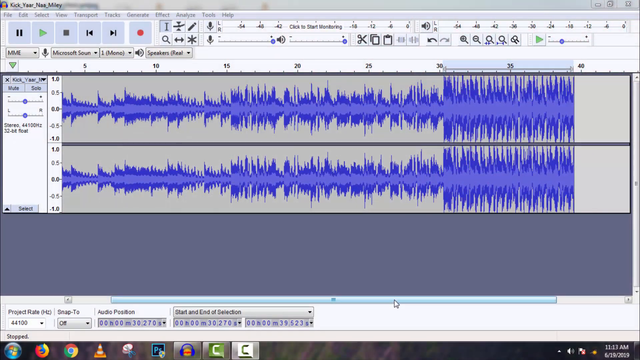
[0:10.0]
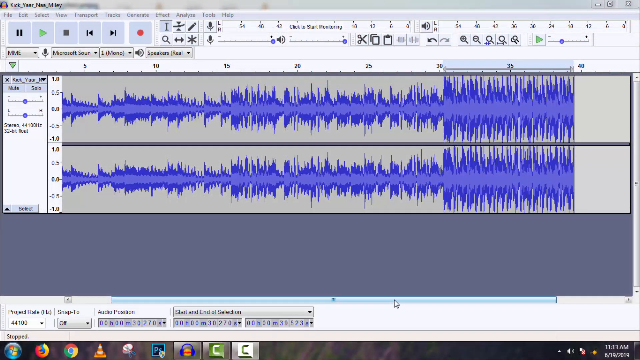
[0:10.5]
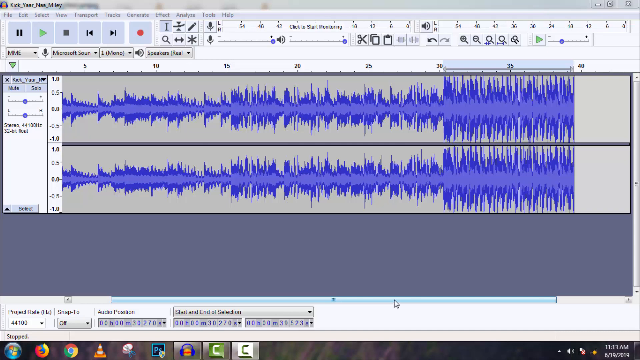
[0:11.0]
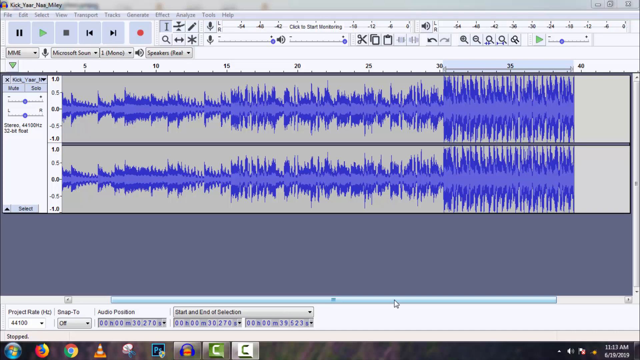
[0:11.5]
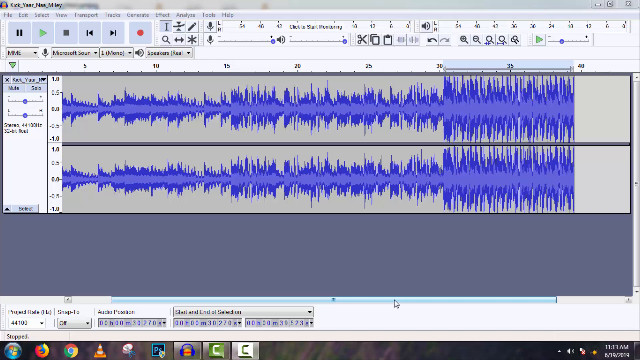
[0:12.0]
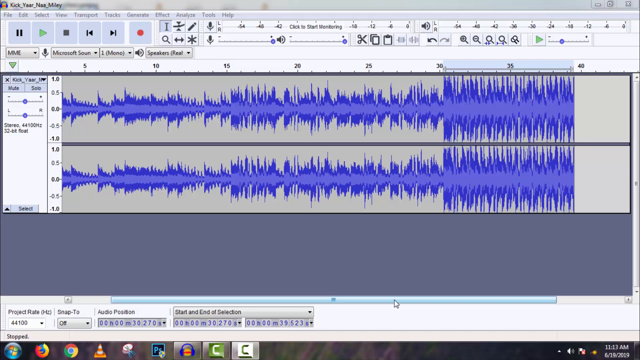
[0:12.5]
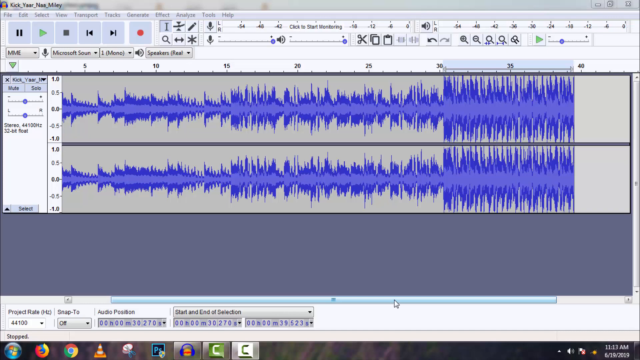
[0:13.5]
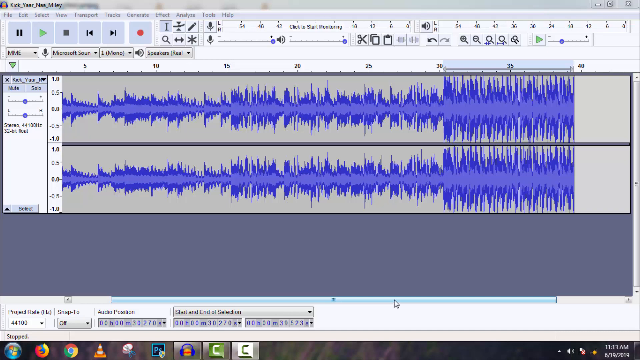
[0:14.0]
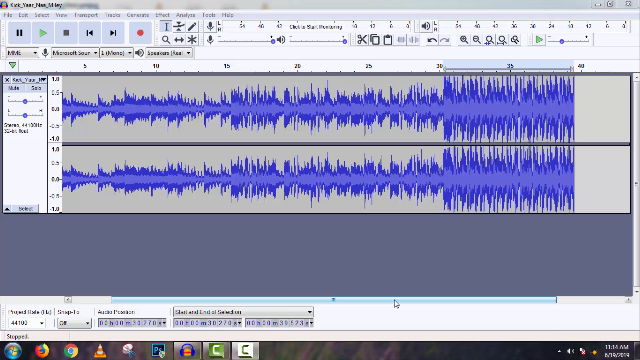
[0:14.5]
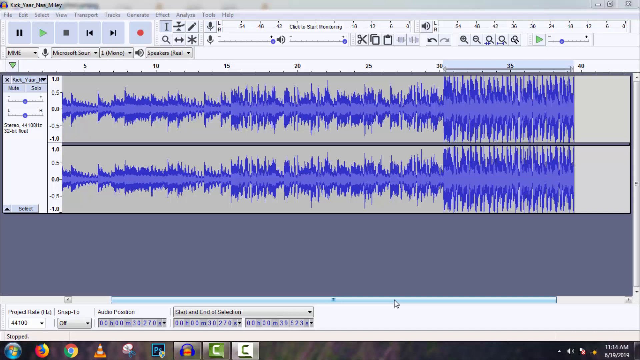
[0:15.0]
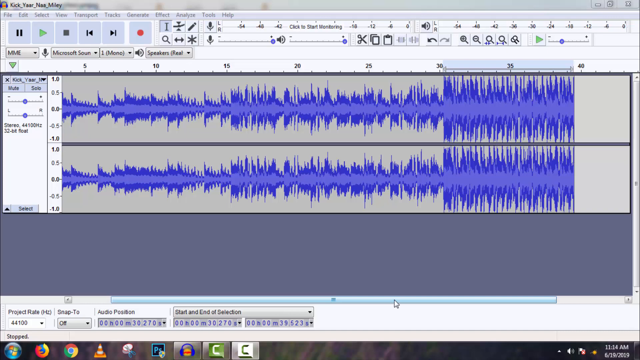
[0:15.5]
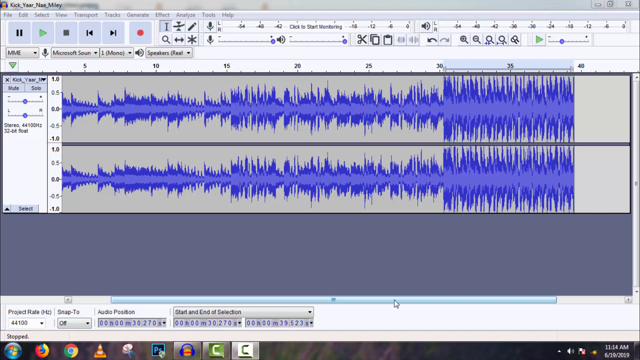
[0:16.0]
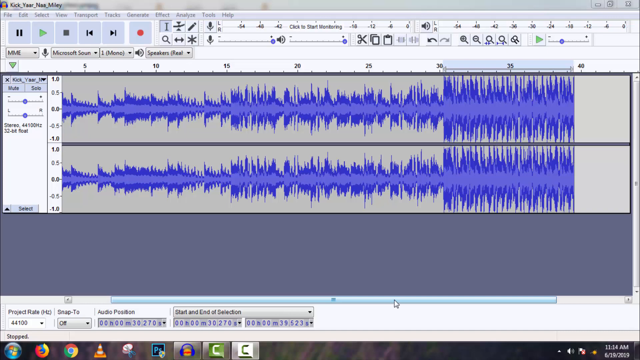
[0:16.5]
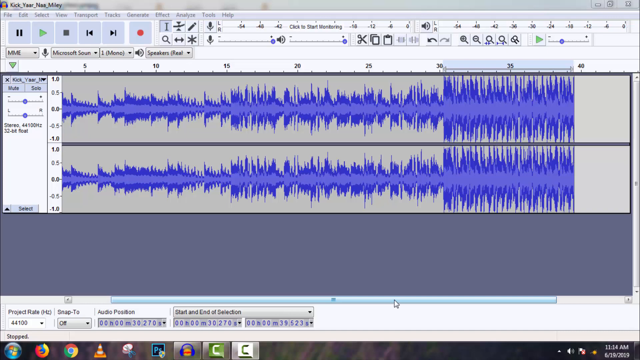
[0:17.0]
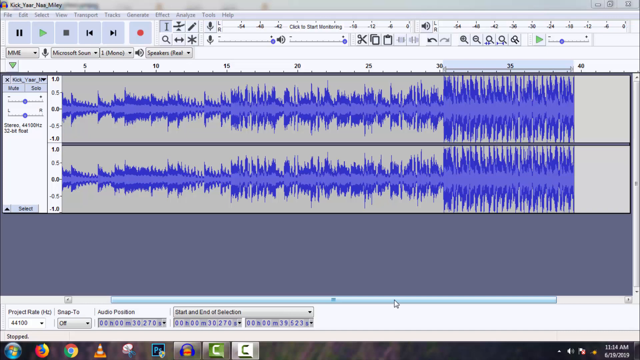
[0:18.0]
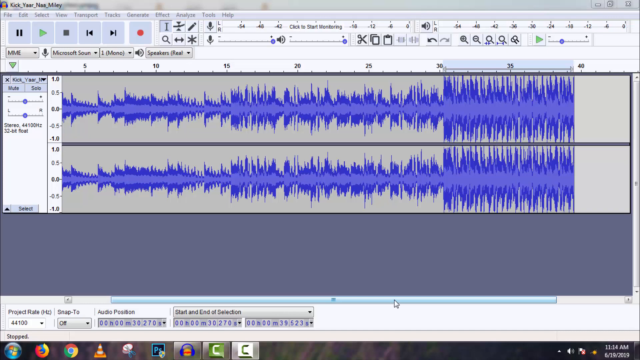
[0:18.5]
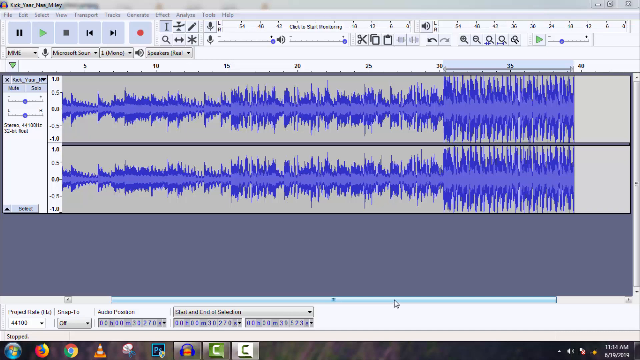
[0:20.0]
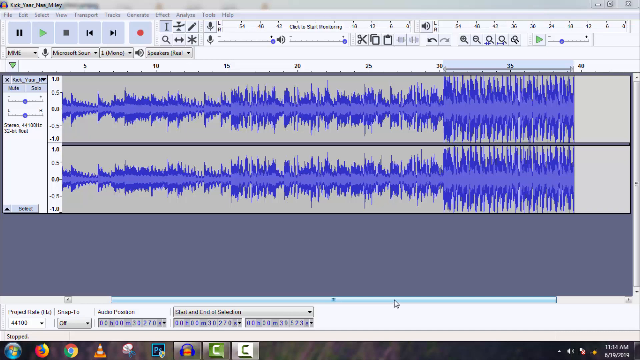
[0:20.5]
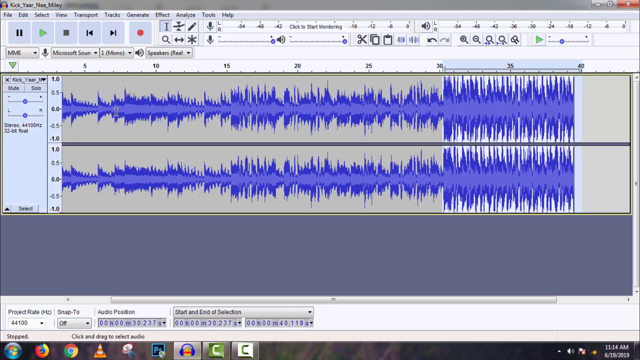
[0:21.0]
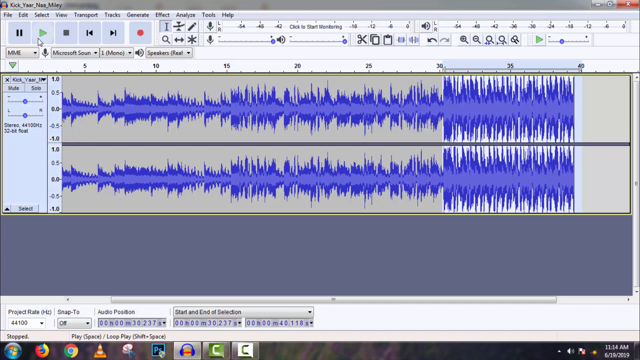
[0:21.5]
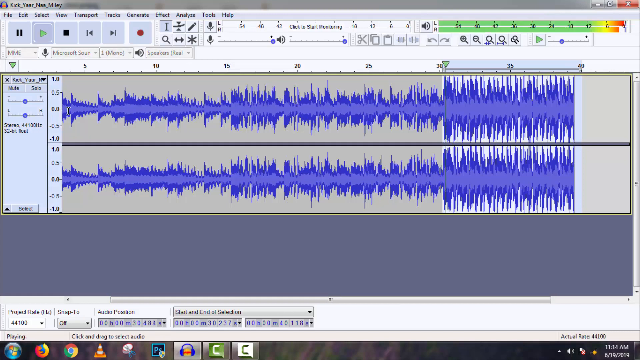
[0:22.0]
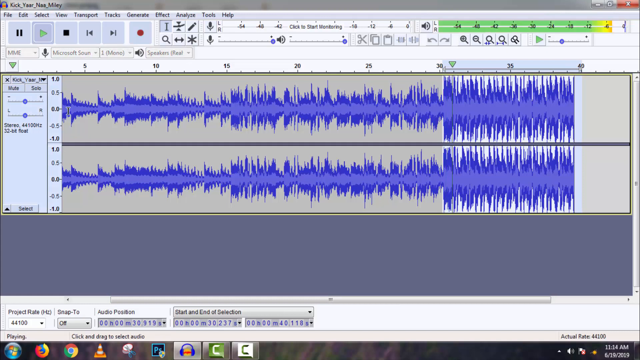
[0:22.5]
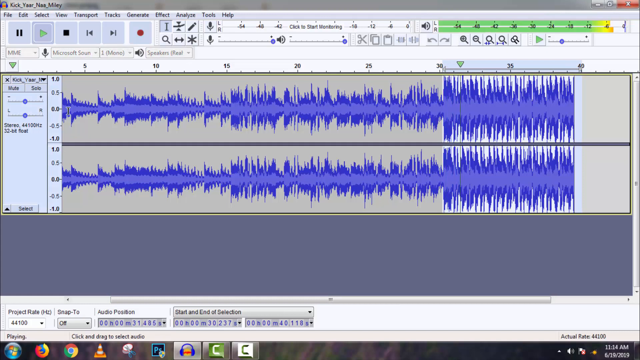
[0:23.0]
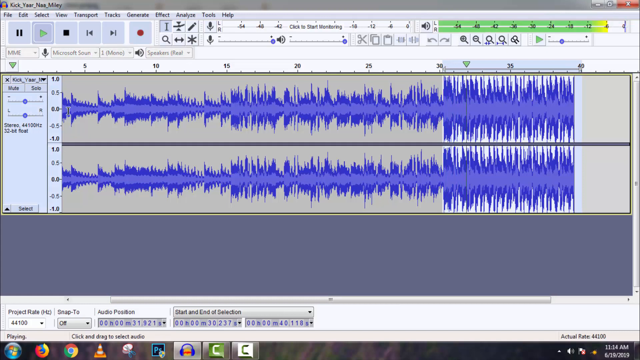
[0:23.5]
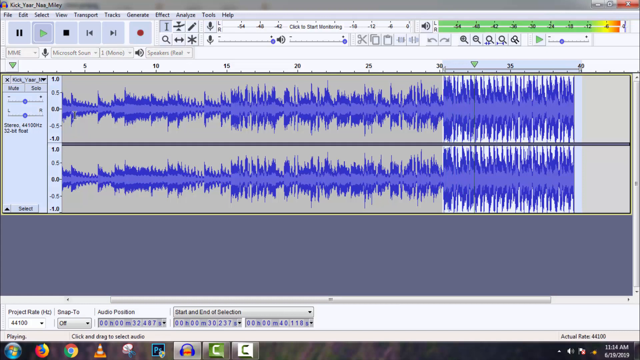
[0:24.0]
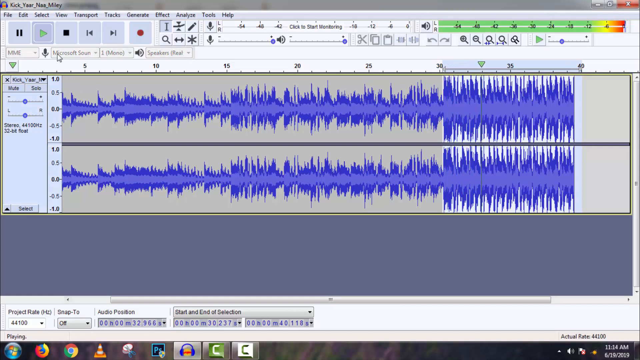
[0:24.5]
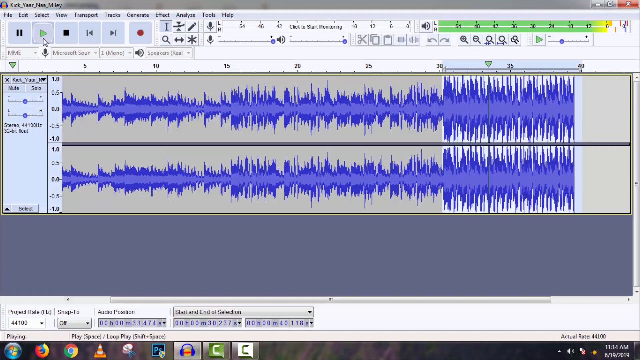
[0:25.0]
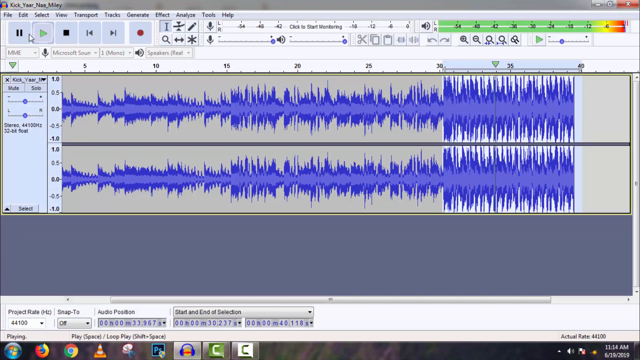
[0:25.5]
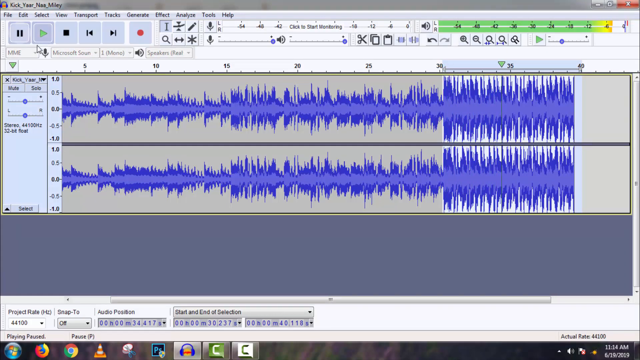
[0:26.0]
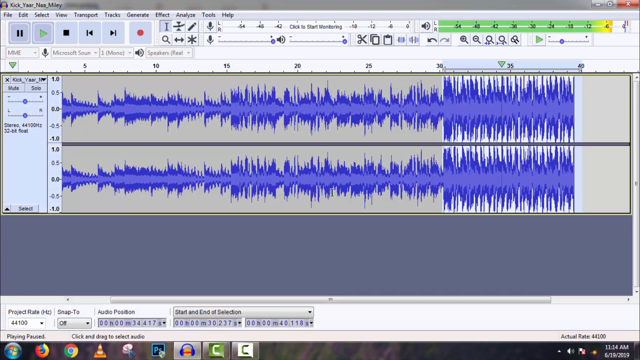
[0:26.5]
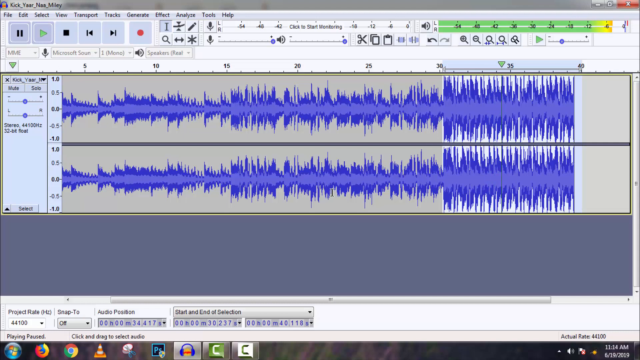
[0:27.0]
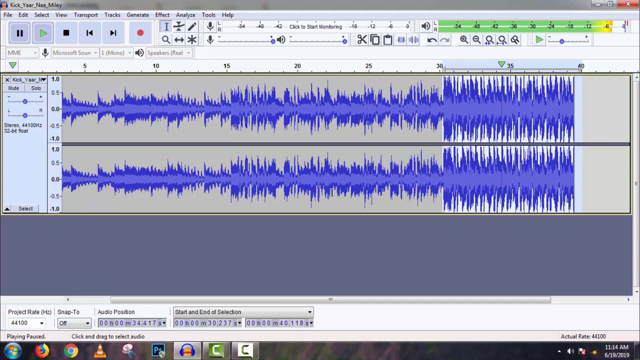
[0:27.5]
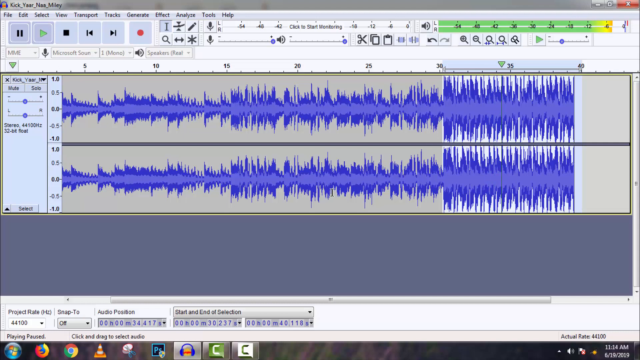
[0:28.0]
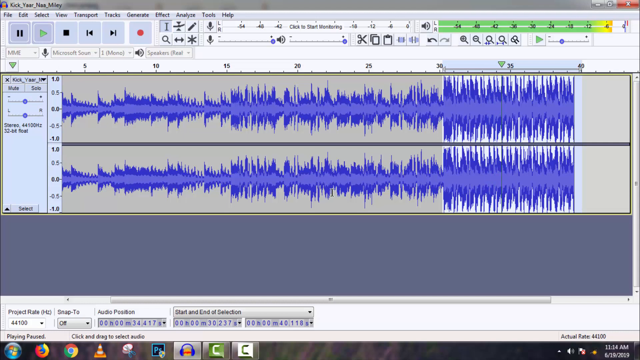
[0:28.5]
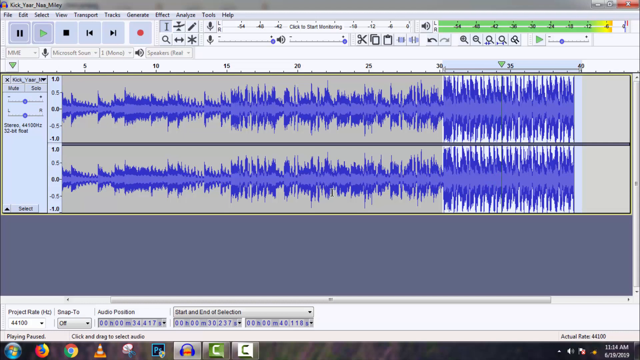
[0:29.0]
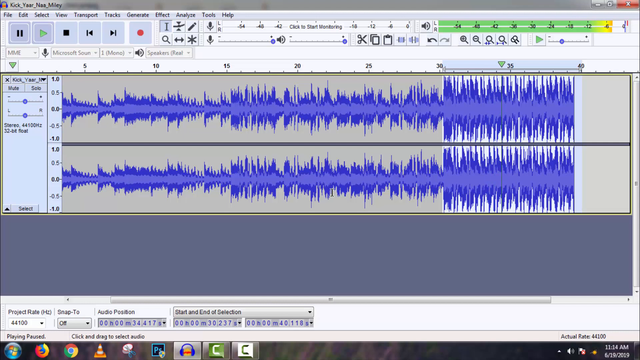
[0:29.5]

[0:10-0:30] What looks like some type of equalizer or synthesizer is shown on a computer screen in an unidentified browser. The sound waves are purple, with a slight light blue-purple mixed in for what seem to be the more consistent or weaker sound waves. Color-coded markings indicate how loud the sound is at each moment. There are the usual play, stop, pause, skip to next, go back to the beginning, and record buttons, displayed in a way that gives the illusion that a recording is being rendered. There are also options for mute and for panning the audio to the left or right, along with magnifying, clipping, and undo options.